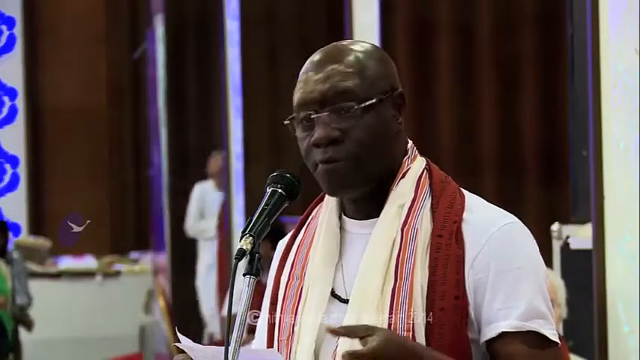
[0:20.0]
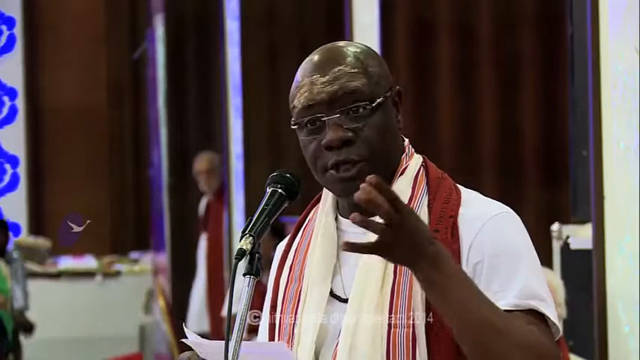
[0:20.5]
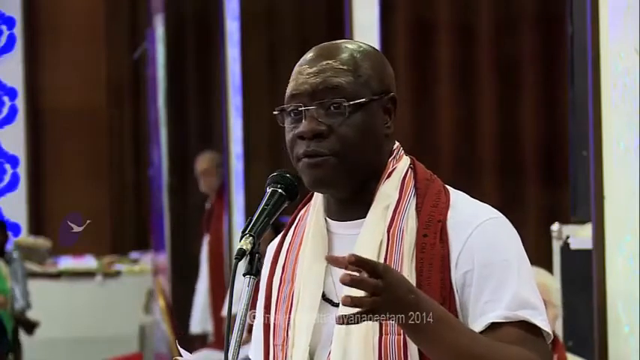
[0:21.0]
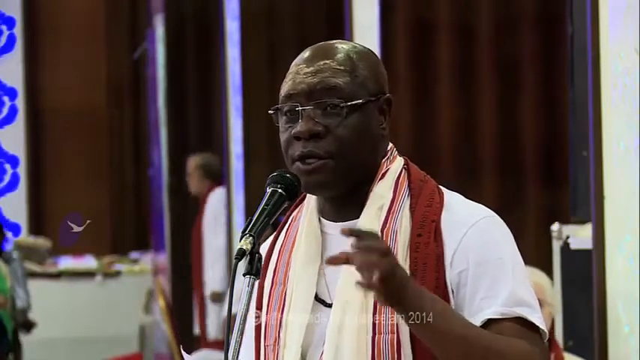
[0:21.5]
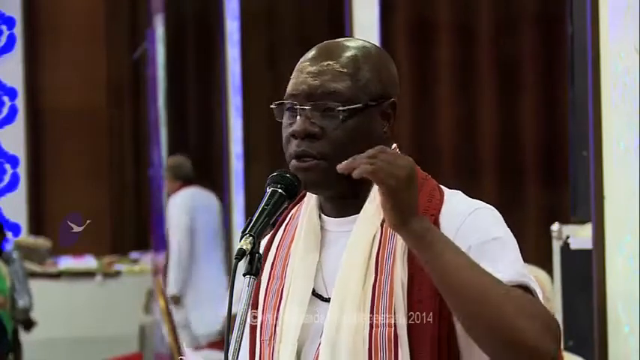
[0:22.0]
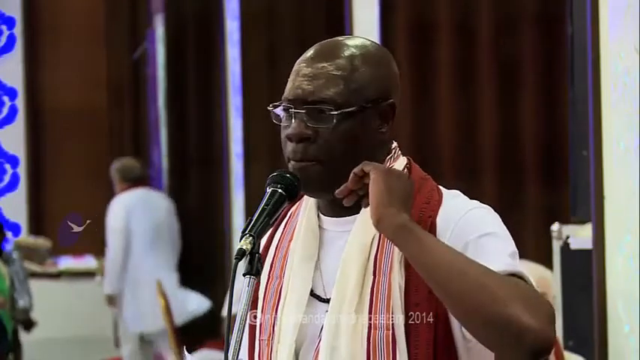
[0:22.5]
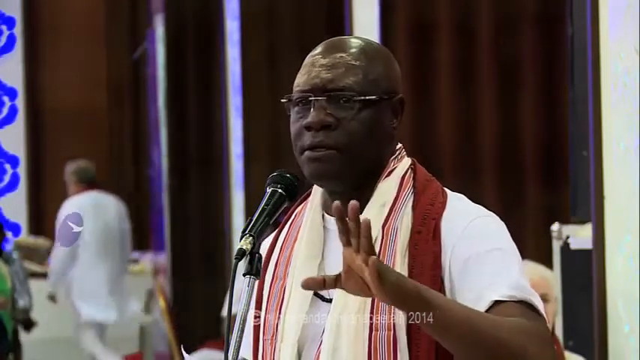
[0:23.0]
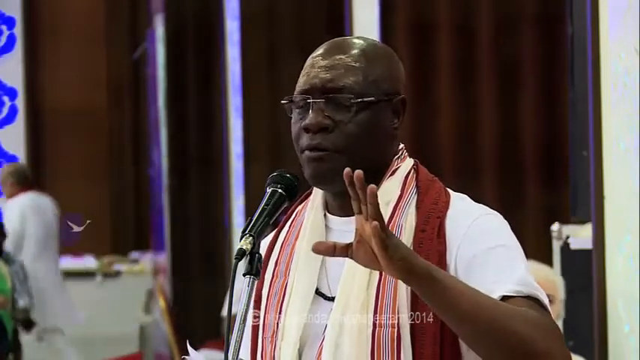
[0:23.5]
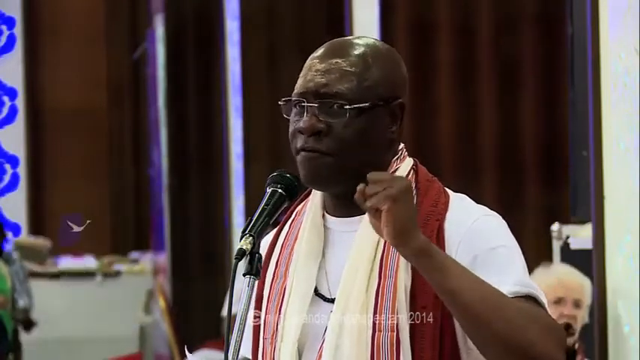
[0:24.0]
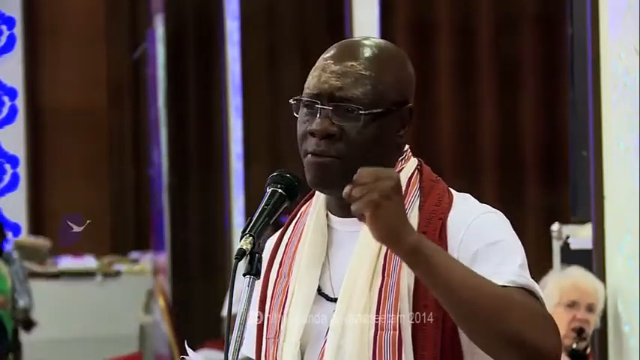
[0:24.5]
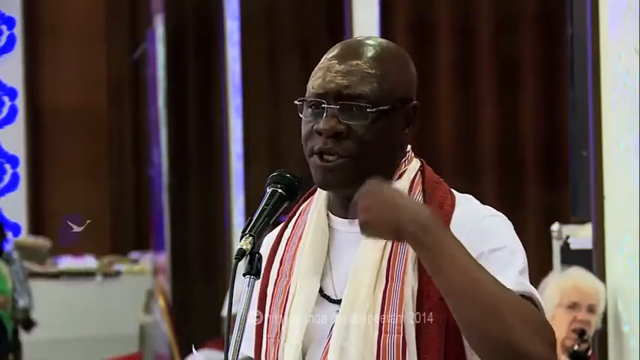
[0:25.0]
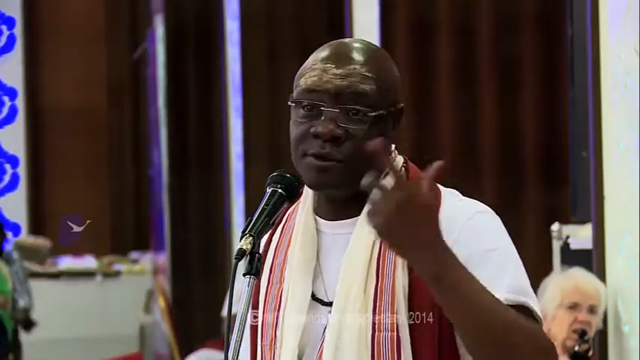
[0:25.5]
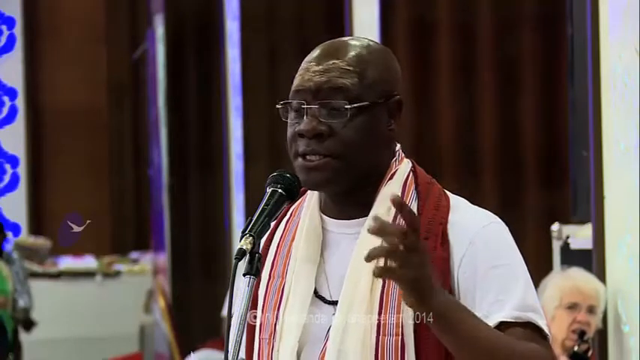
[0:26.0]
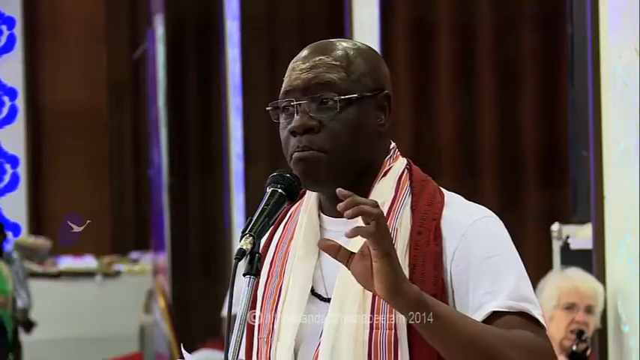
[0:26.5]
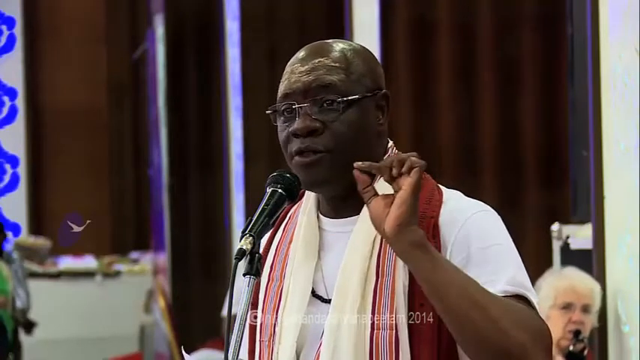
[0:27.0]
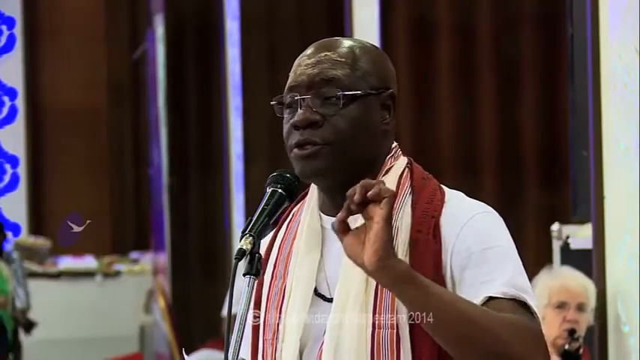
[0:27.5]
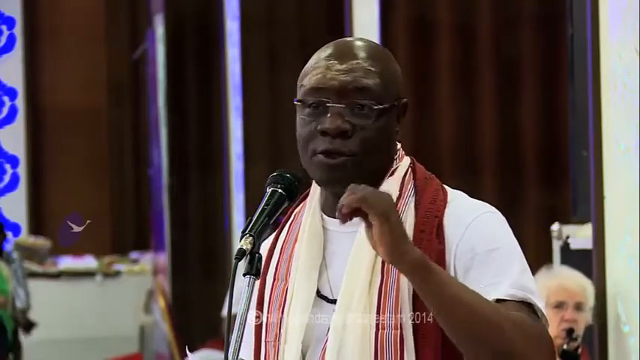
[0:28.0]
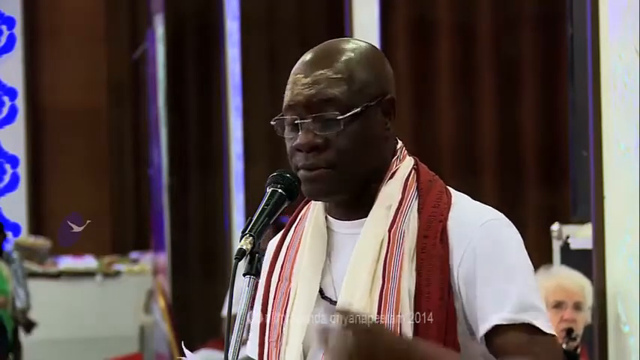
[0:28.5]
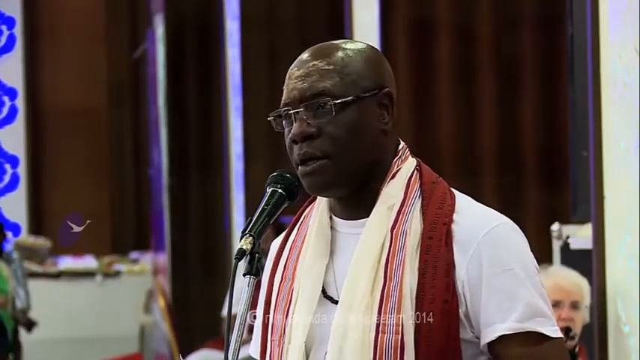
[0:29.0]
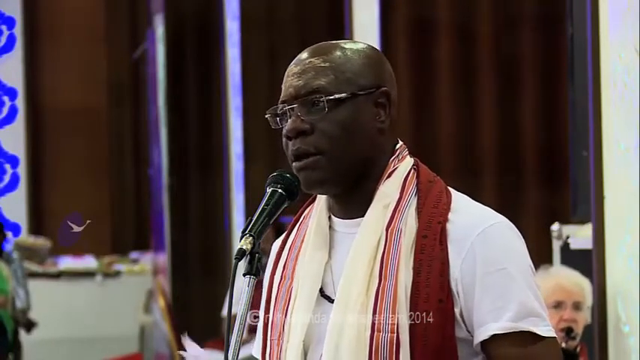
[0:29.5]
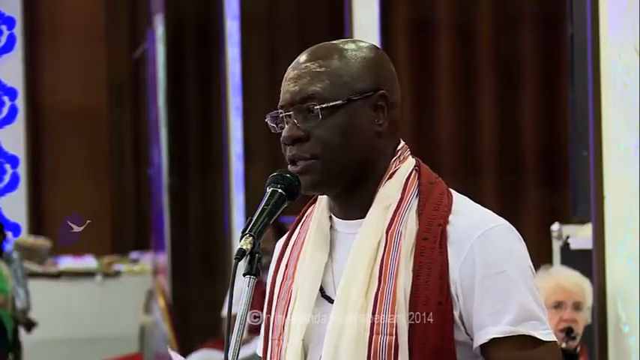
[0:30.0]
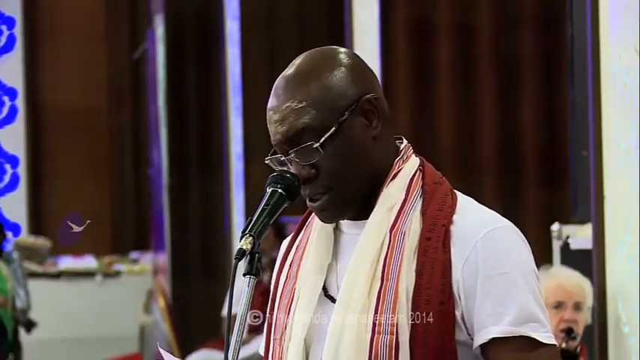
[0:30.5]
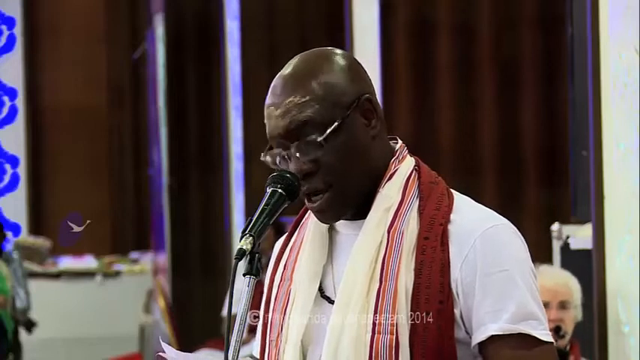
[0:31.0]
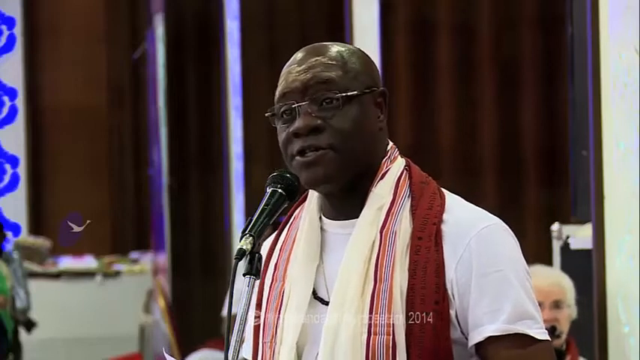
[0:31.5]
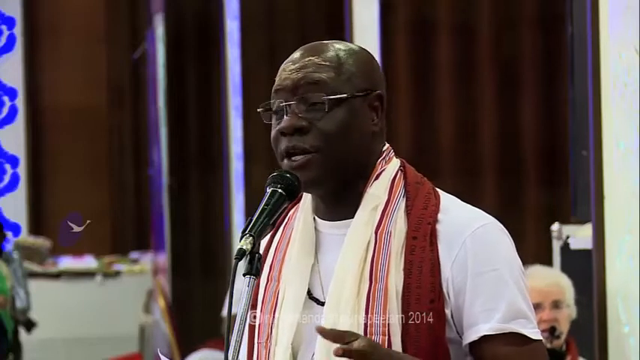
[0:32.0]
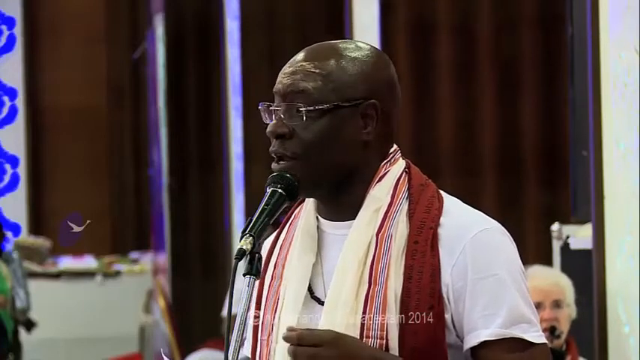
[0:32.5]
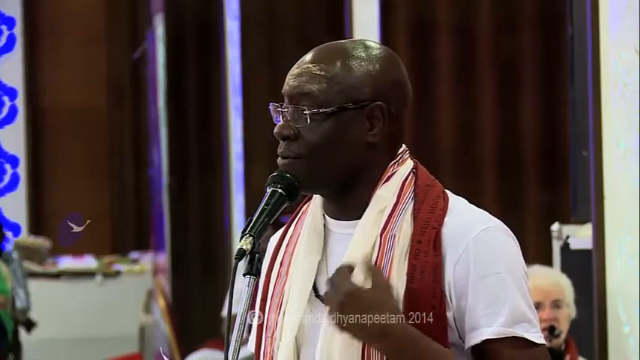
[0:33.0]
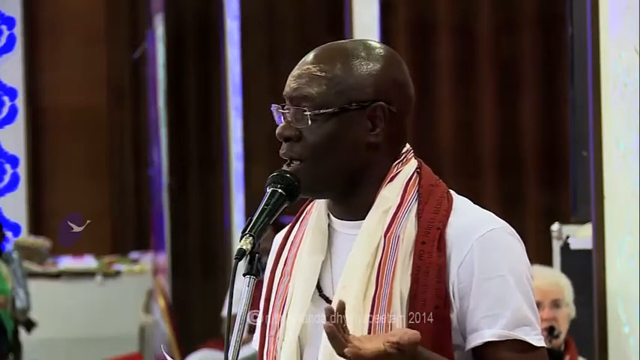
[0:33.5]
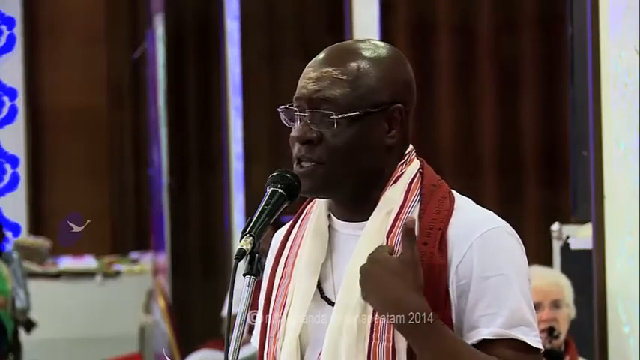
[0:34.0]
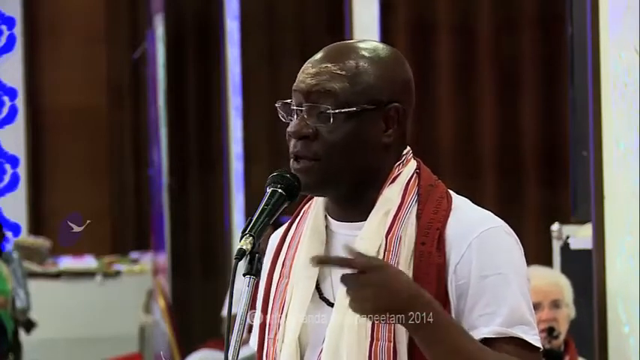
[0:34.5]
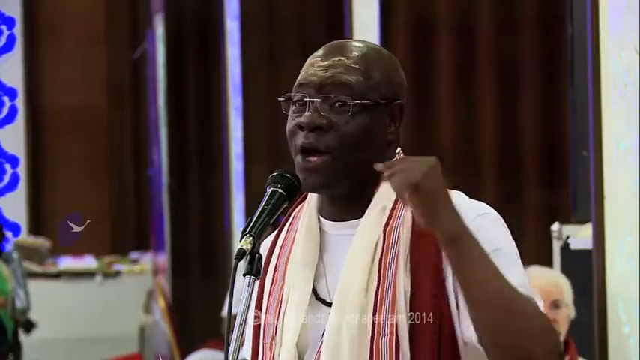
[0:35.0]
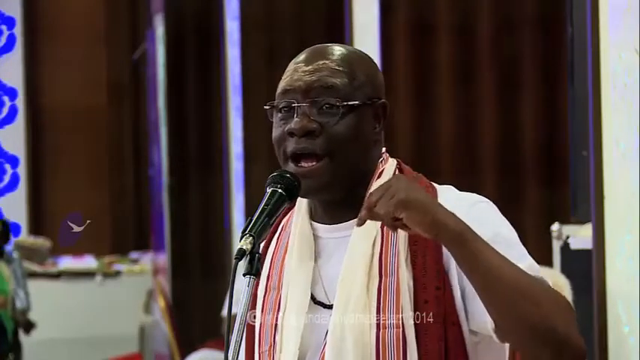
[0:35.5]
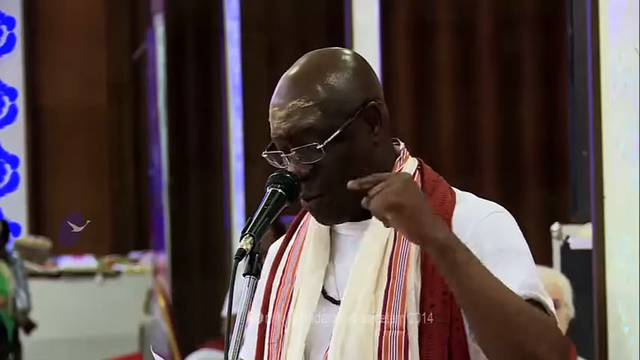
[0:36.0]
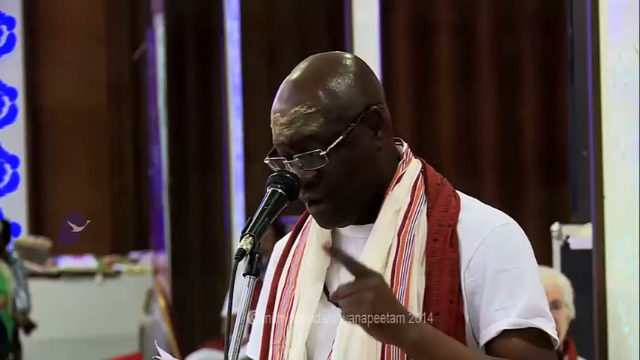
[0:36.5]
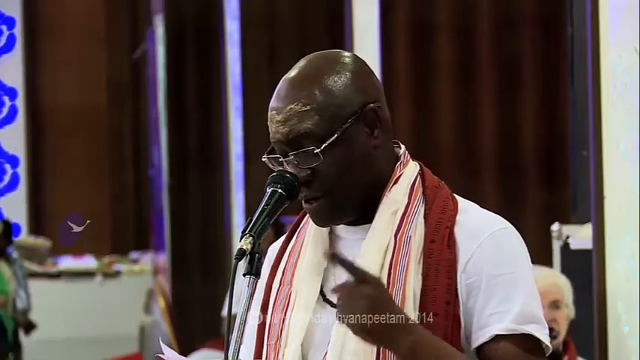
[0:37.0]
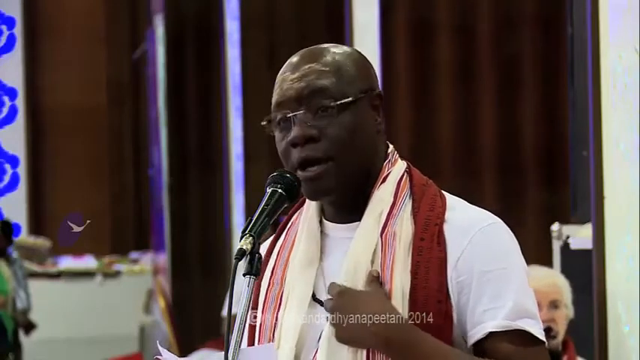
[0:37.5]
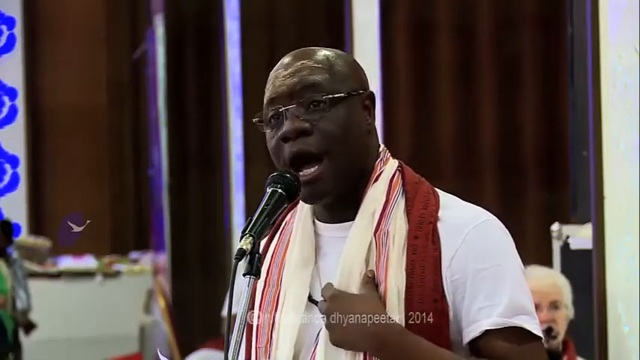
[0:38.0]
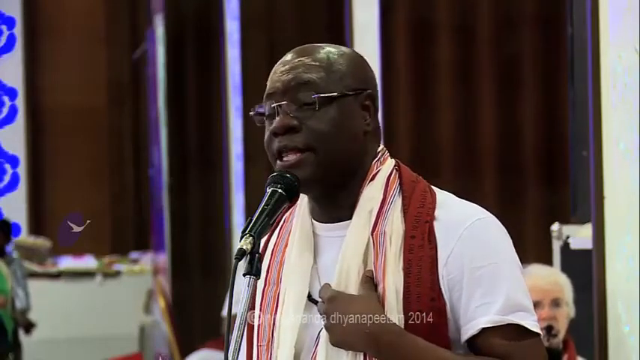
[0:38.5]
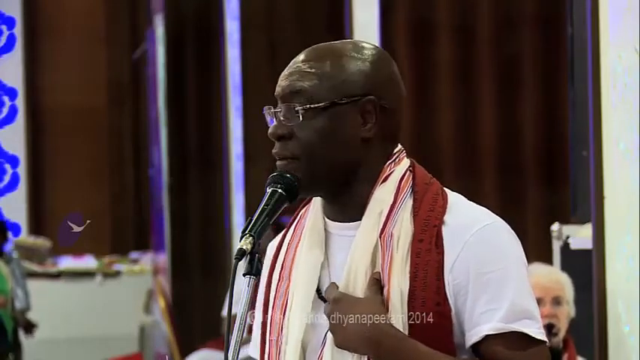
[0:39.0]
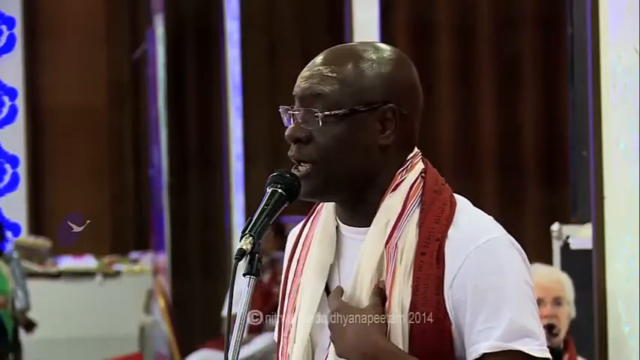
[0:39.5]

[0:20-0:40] The video, called Nityananda Dhyanapeetam, copyright 2014, presents a man named Jorge Coelho, spelled C-O-E-L-H-O. He has very dark skin and wears a white T-shirt, a scarf around him that looks like it is meant to appear Hindu, and rectangular rimless glasses. He speaks into a black microphone on a stand that has a little silver on it. Superimposed in the corner of the screen are some blue flowers on the left and something like a swan. In the background, a bearded man in robes, a white kurta pajama, is kind of milling around, and a lady with gray hair in the background seems to be listening to Jorge talk. Jorge uses his left hand a lot to make different points, looks around at the audience a lot, and makes many facial expressions.